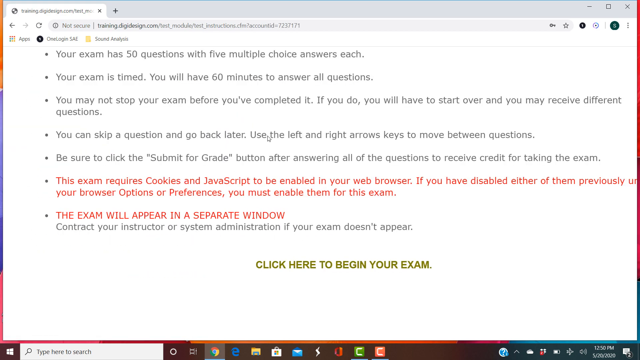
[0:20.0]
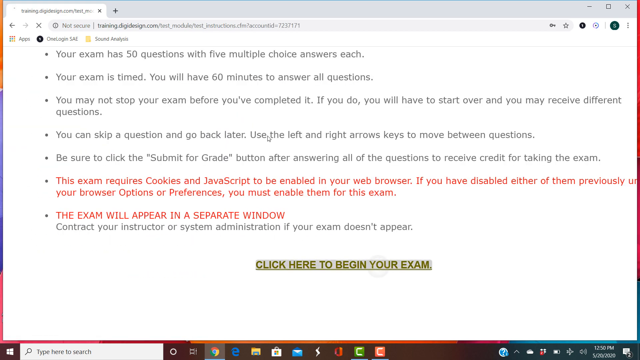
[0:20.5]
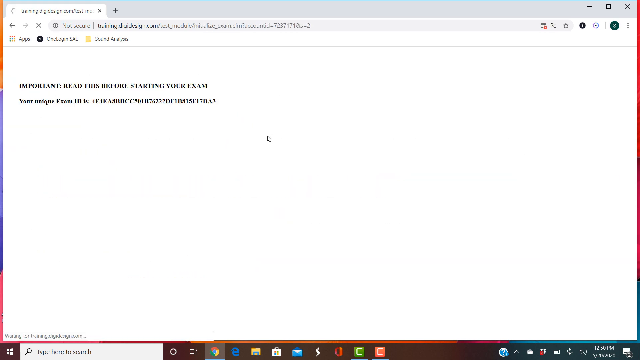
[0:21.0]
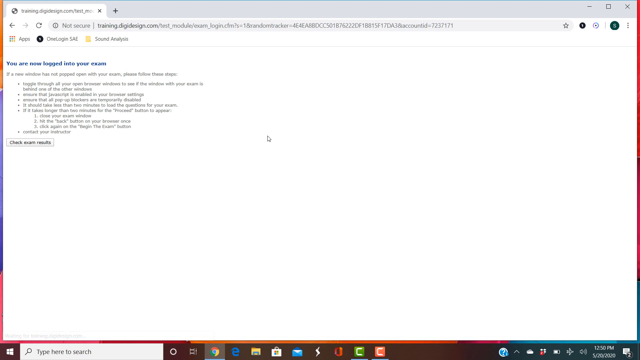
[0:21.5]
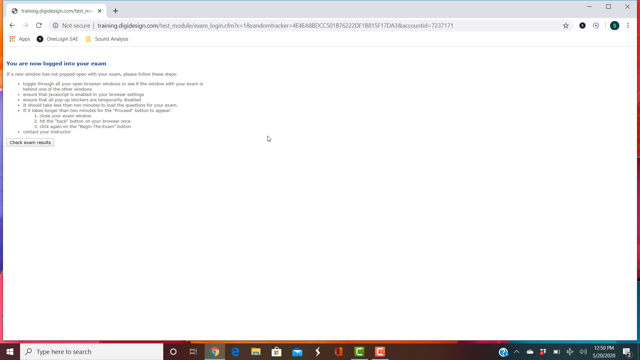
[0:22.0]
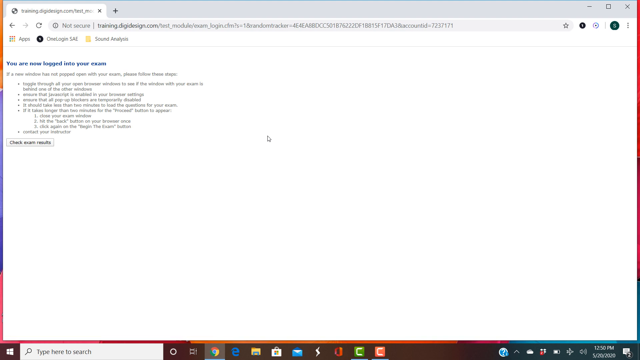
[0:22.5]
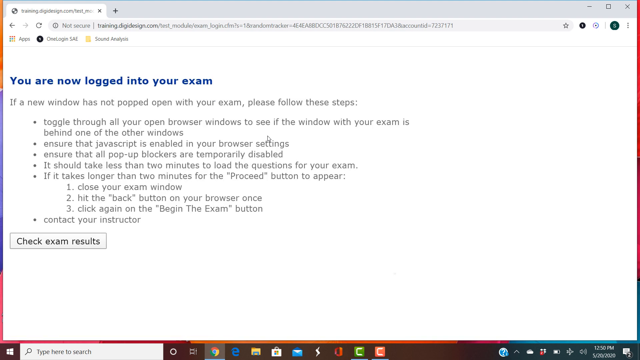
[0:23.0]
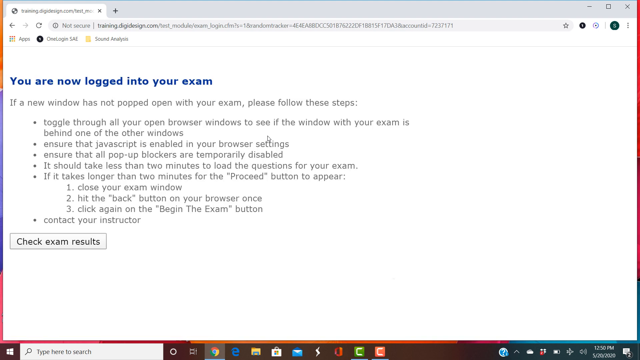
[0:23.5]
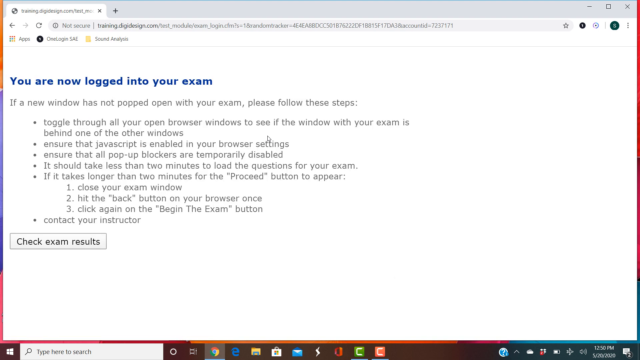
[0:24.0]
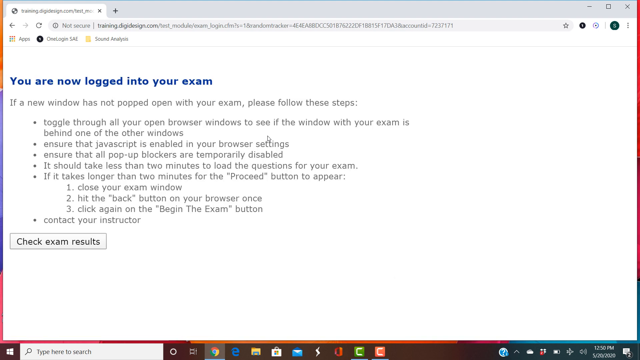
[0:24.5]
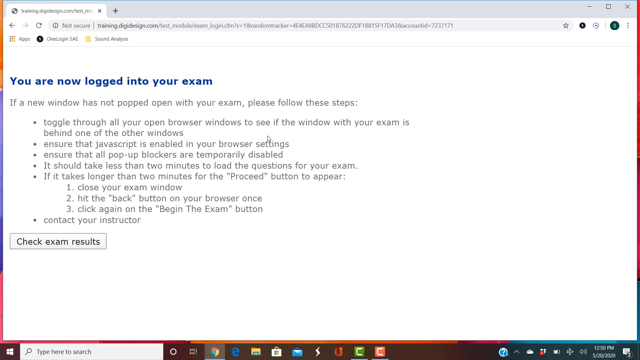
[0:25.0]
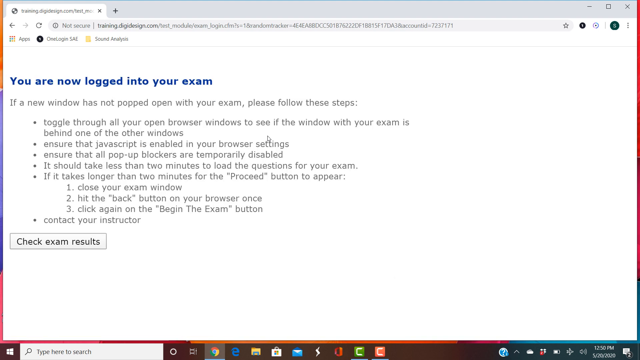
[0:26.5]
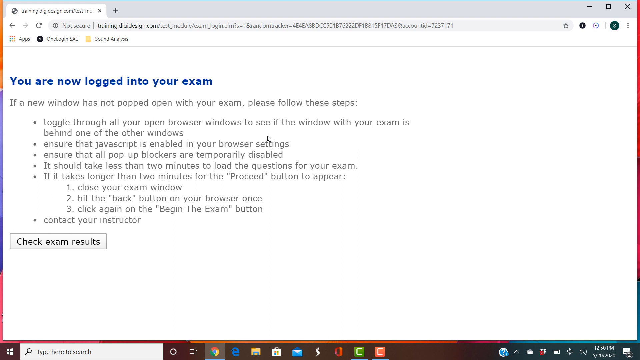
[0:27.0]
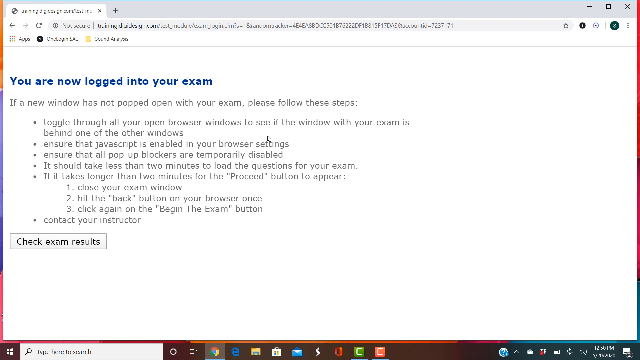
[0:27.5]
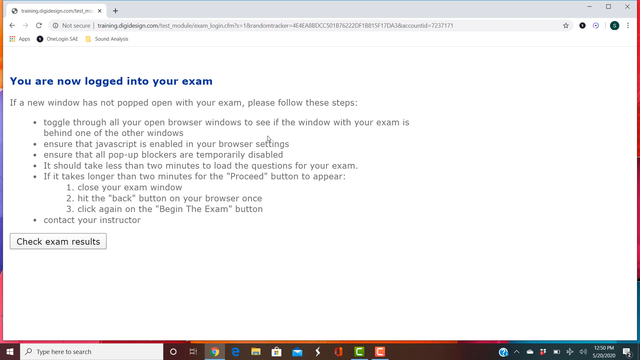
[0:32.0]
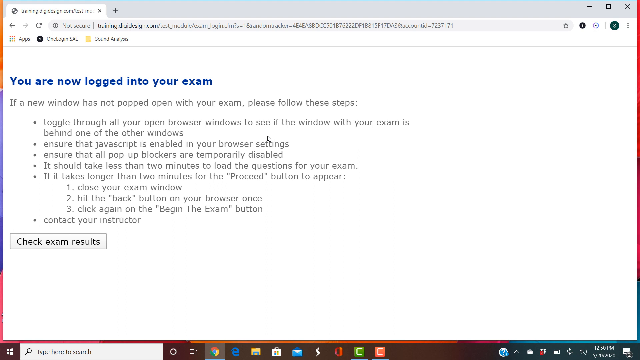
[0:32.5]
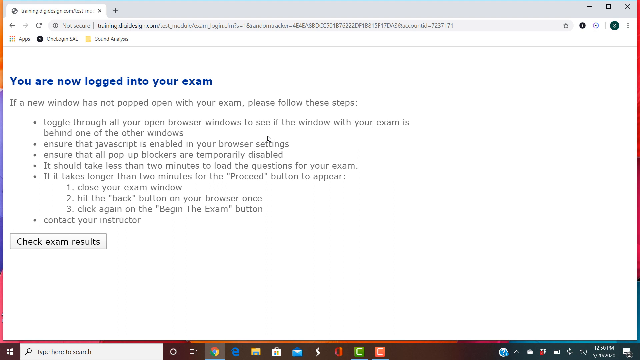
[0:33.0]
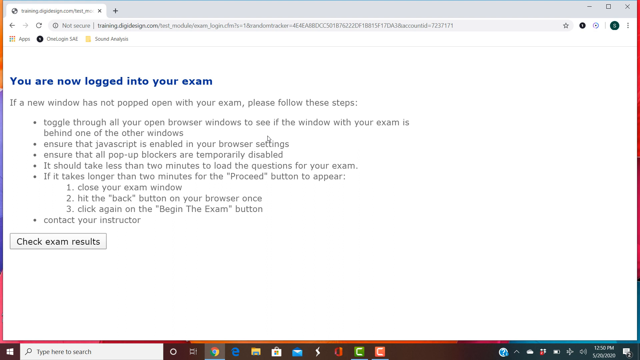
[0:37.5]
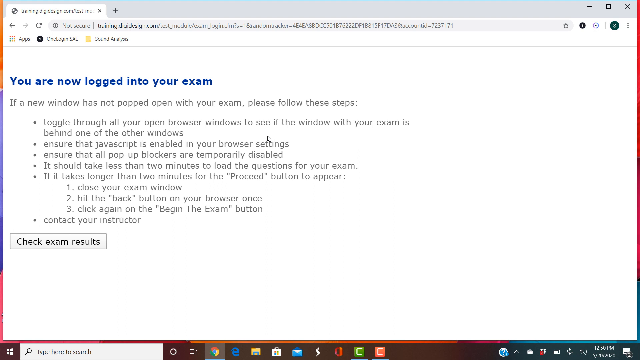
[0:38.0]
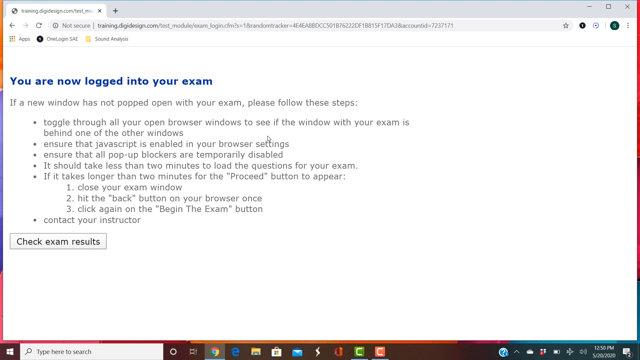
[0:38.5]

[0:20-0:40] On the Windows computer, a website is being accessed in Google Chrome. The page has a white background and reads in blue "you are now logged into your exam". Below it are instructions: "if a new window has not popped up", "has not popped open with your exam. Please follow the following instructions. Toggle through all your open browser windows." Further lines read "Ensure that Javascript is enabled in your browser" and mention that it "should take less than 2 minutes to load the questions for your exam. If it takes longer than 2 minutes for the proceed button to appear".